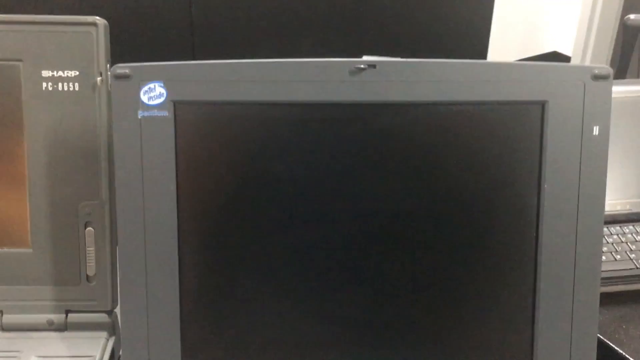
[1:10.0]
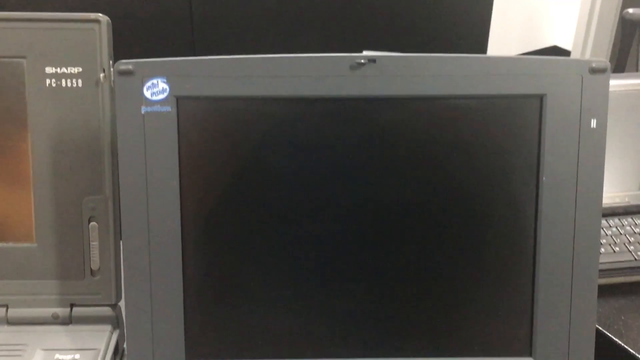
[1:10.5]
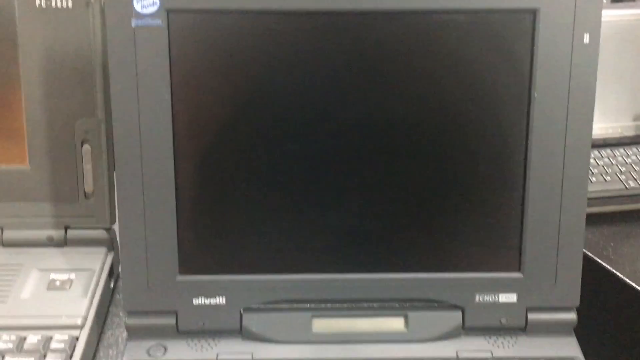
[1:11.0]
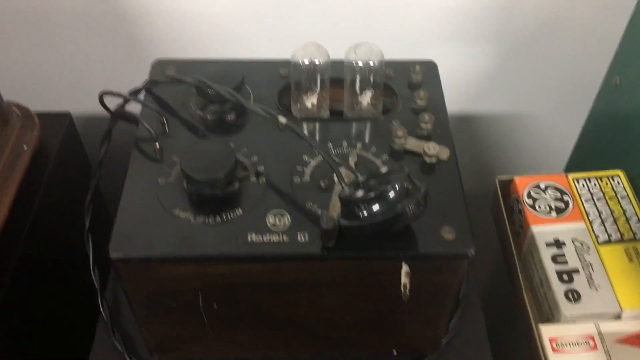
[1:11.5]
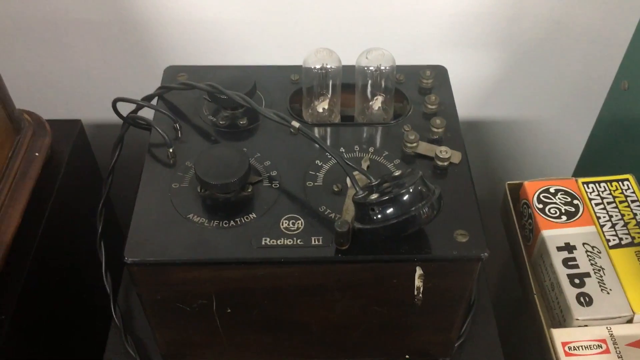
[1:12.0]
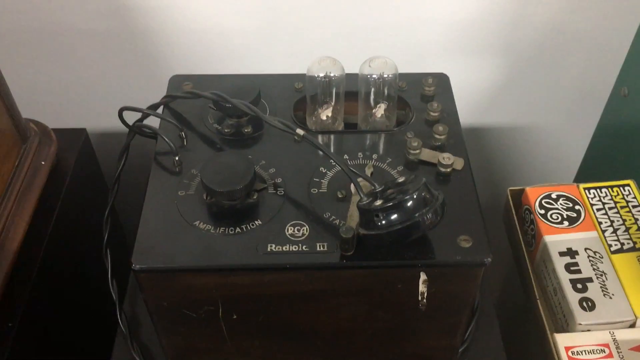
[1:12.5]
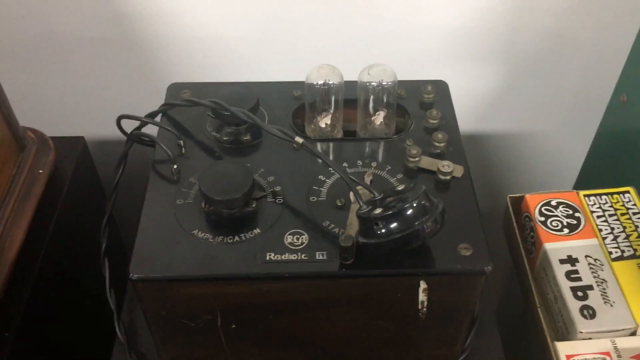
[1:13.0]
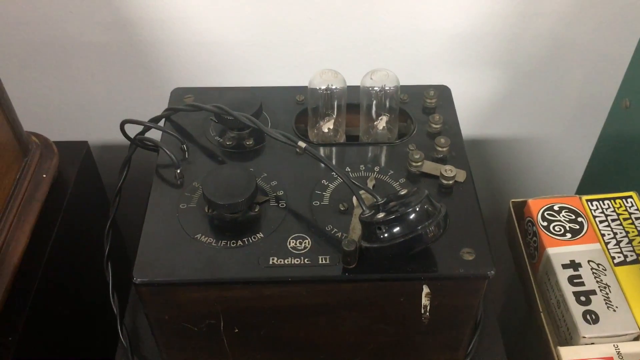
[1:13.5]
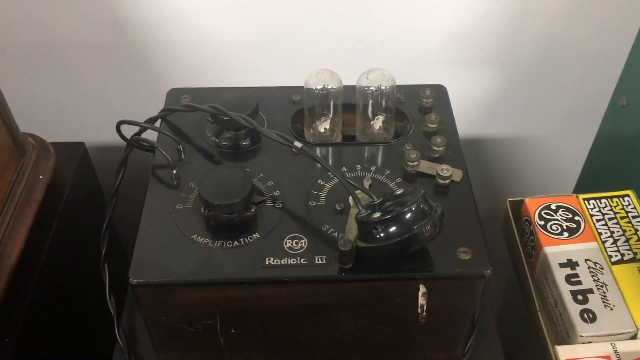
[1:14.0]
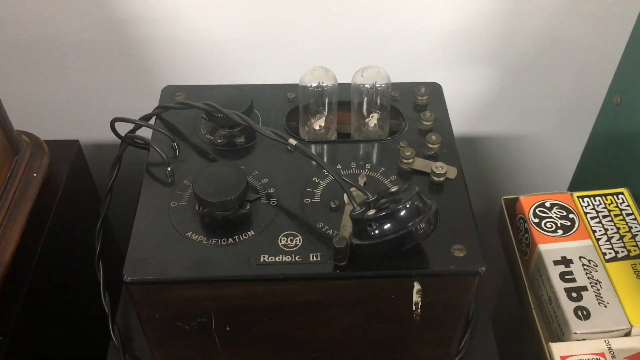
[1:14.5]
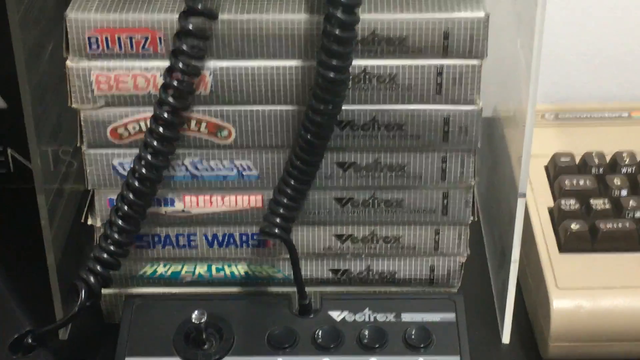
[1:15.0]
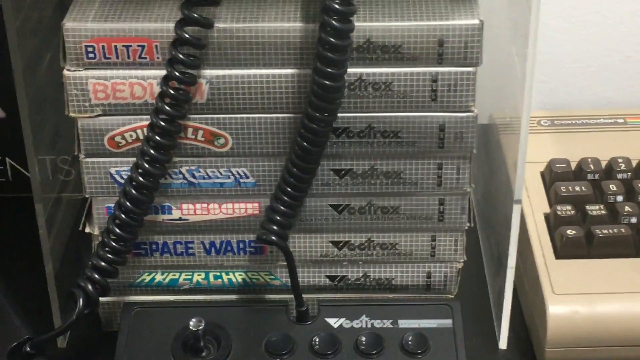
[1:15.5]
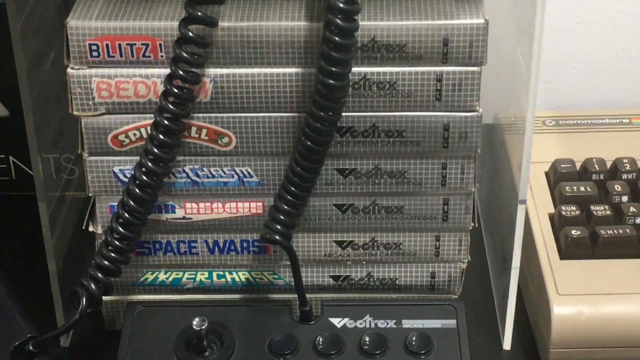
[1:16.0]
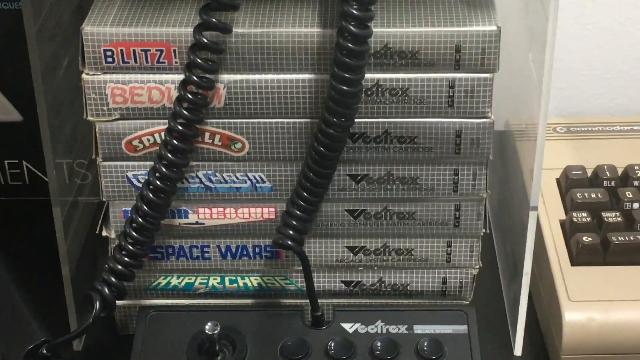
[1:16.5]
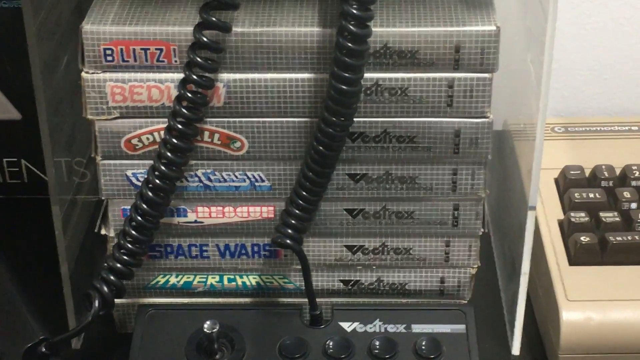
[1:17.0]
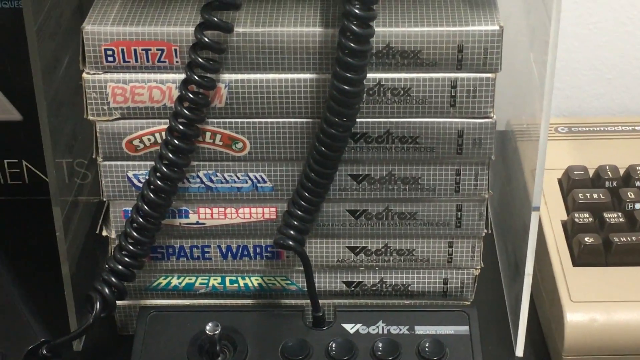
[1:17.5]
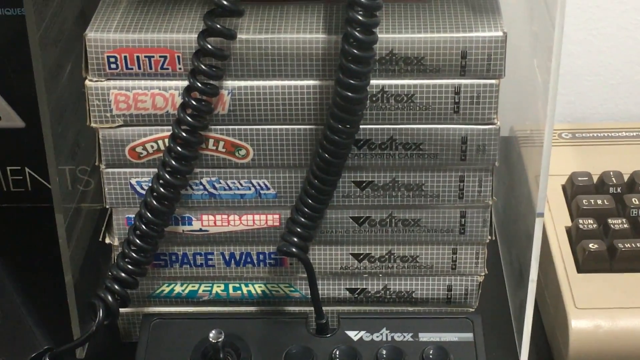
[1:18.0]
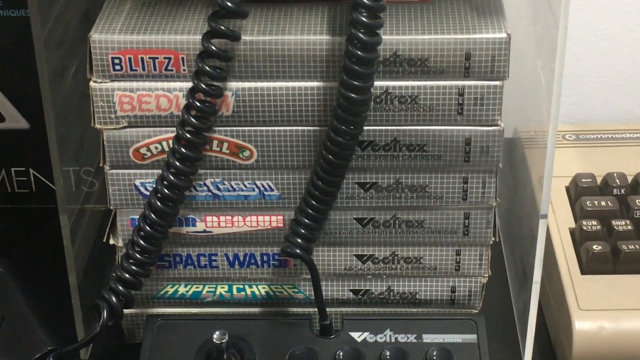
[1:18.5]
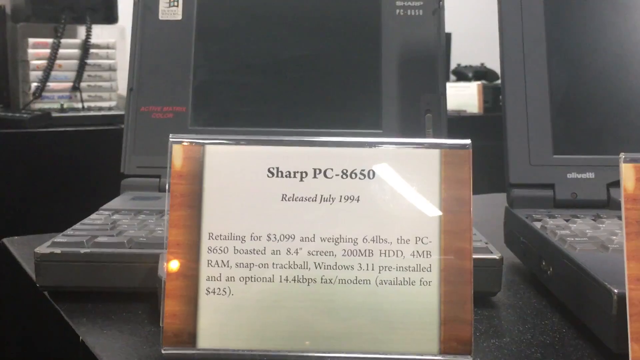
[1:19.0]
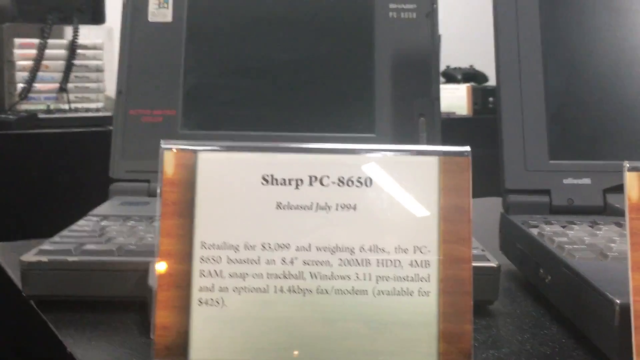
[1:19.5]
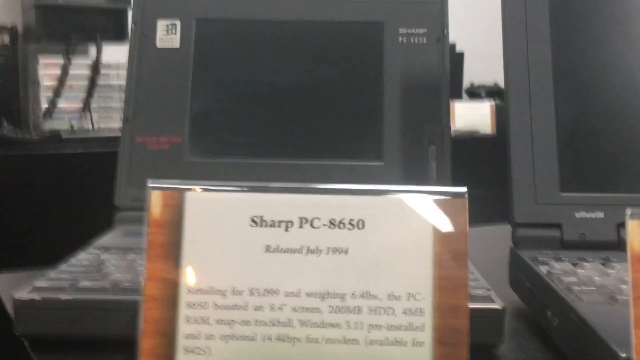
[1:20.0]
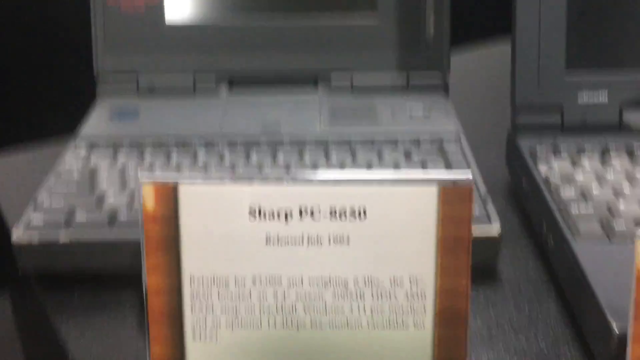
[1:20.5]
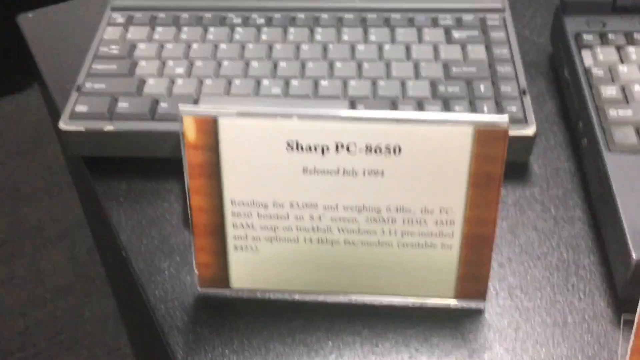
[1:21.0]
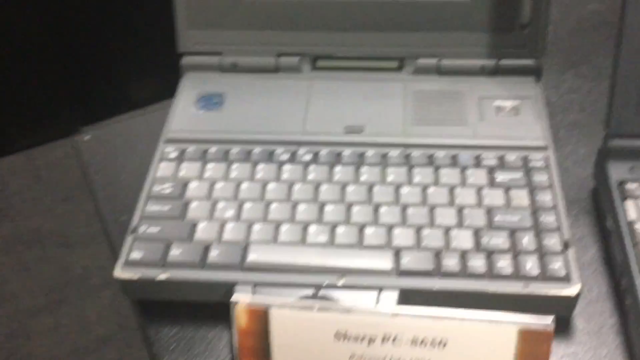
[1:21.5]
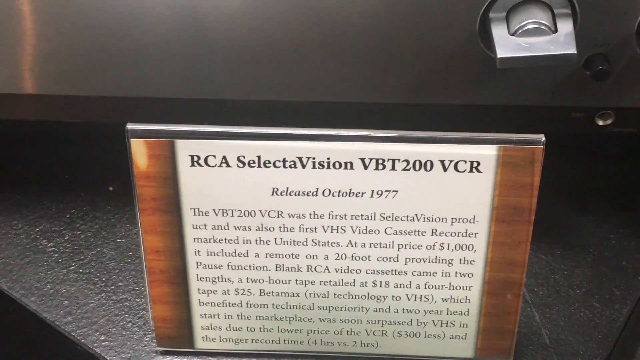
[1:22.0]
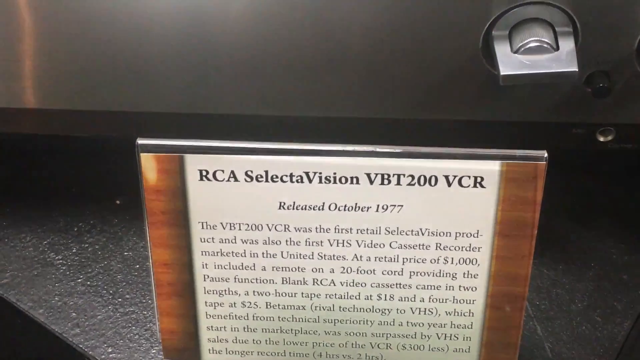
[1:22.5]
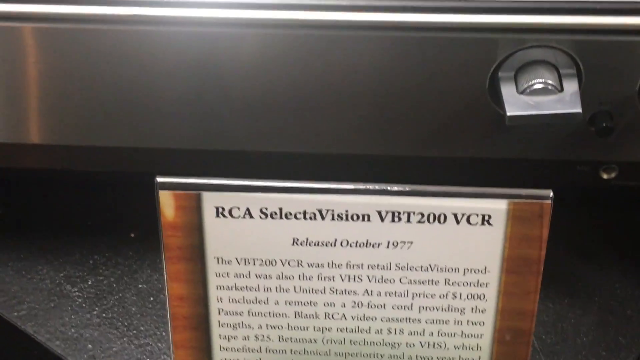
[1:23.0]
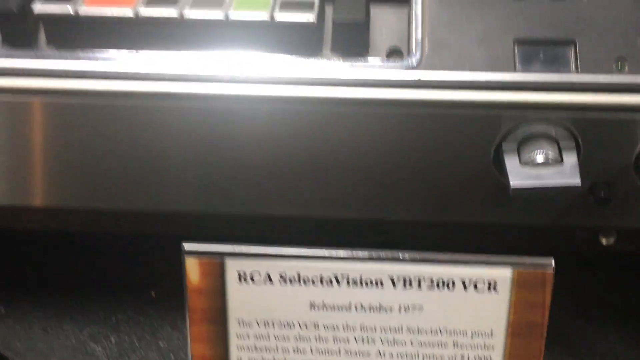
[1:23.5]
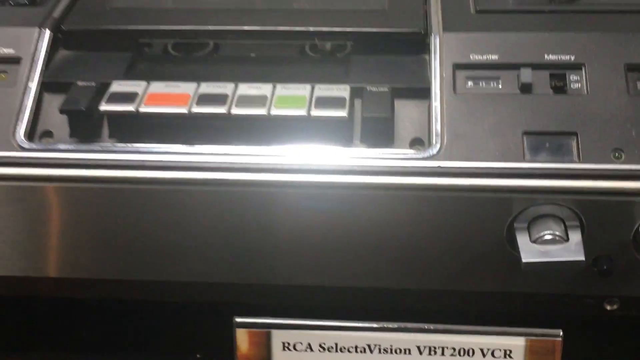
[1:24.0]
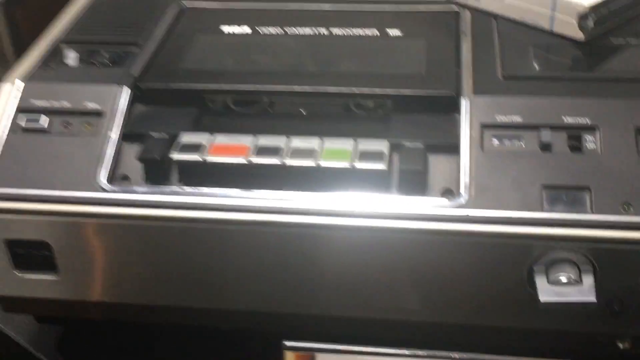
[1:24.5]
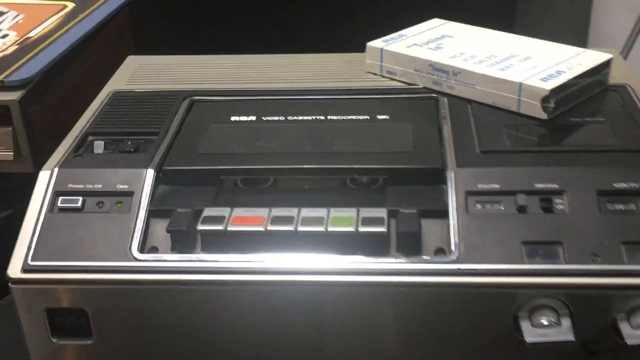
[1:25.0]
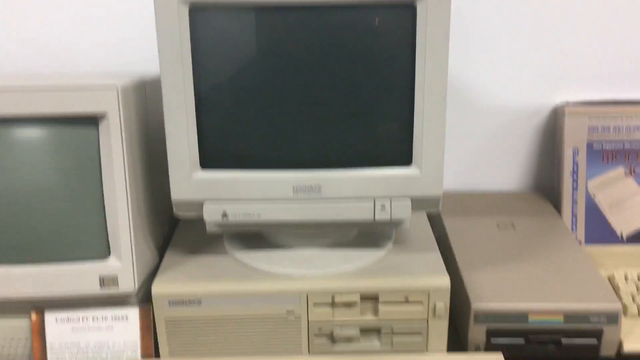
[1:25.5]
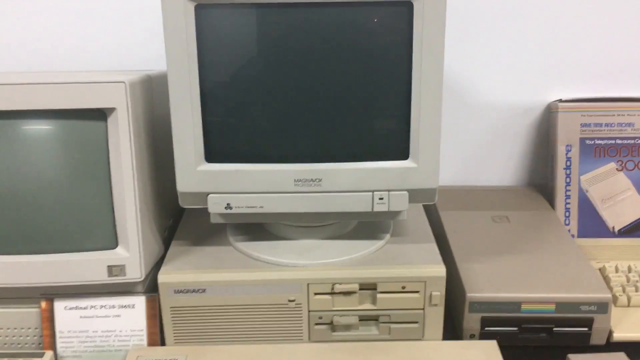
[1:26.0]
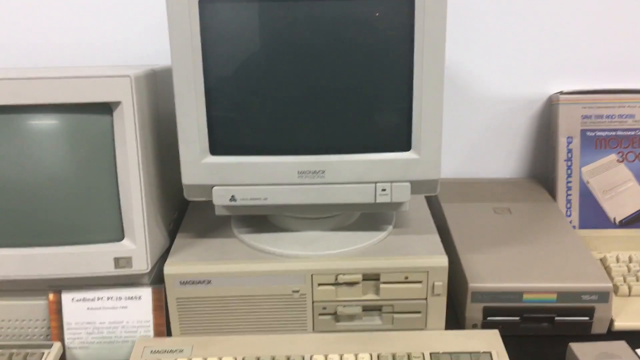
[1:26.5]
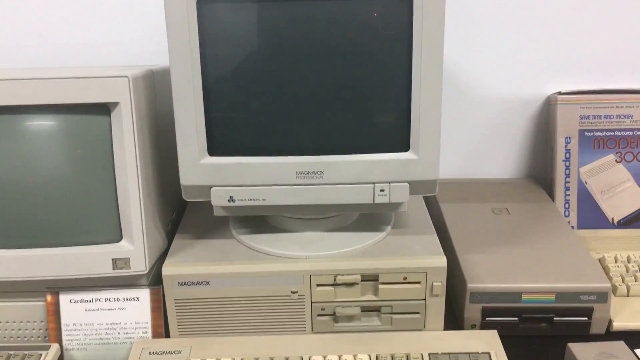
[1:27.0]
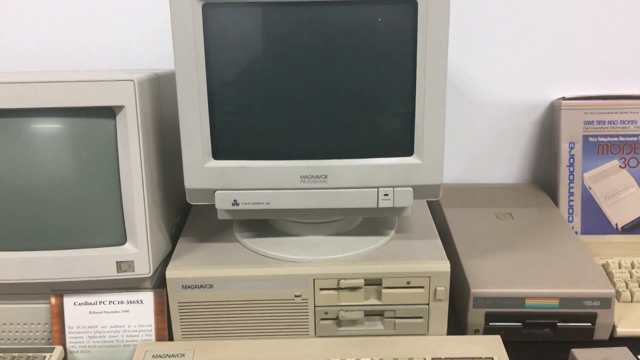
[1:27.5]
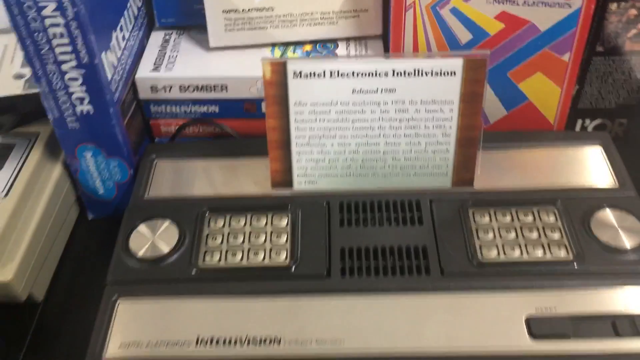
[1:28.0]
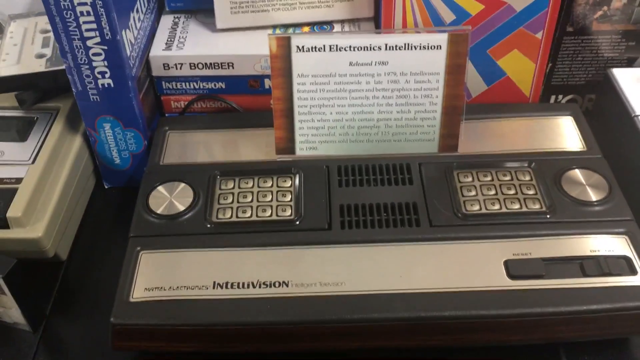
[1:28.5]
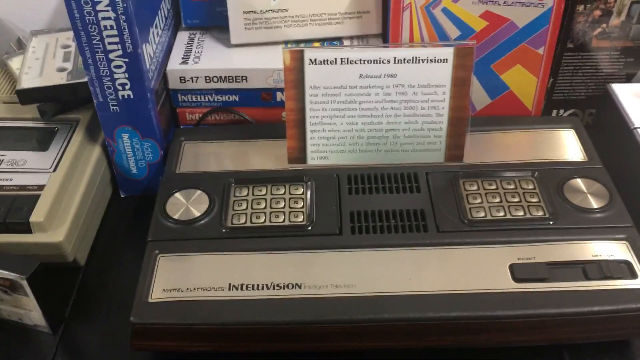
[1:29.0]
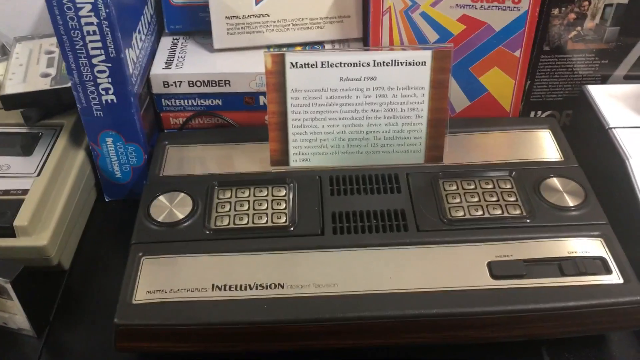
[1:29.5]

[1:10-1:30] An item that seems to be a Sharp PT1111 appears, seemingly a monitor computer or laptop computer. A Sharp PC8660 follows, then RCA selective machines and something that seems to be Panasonic, along with other very old machines that are hard to recognize.